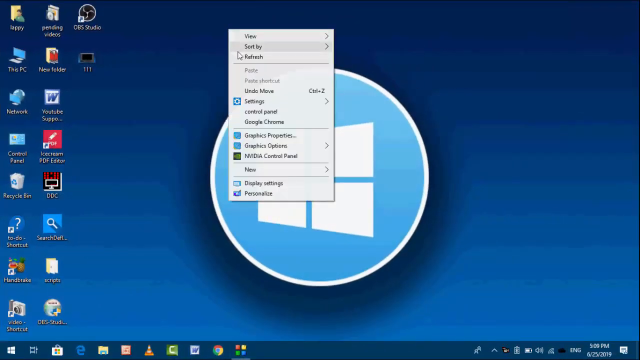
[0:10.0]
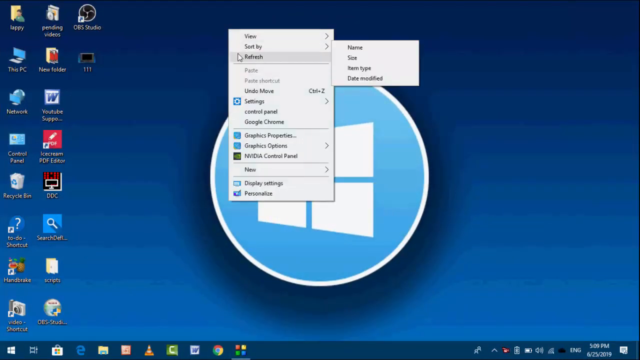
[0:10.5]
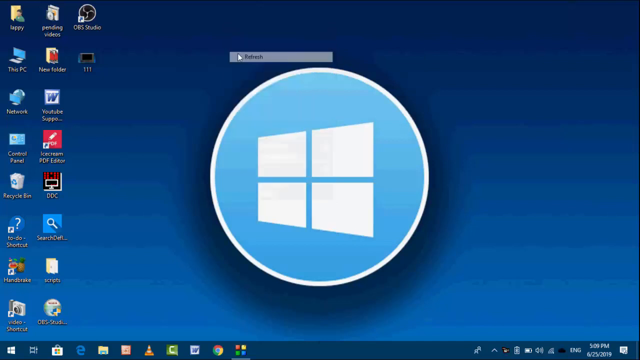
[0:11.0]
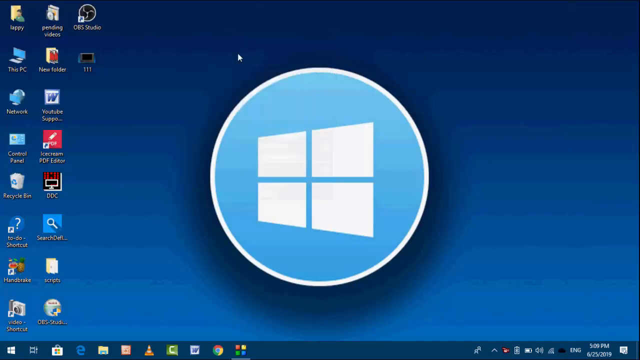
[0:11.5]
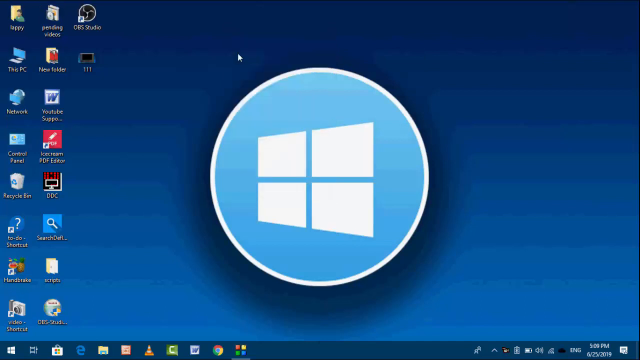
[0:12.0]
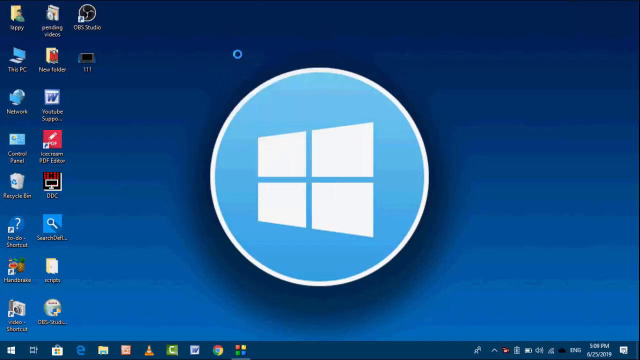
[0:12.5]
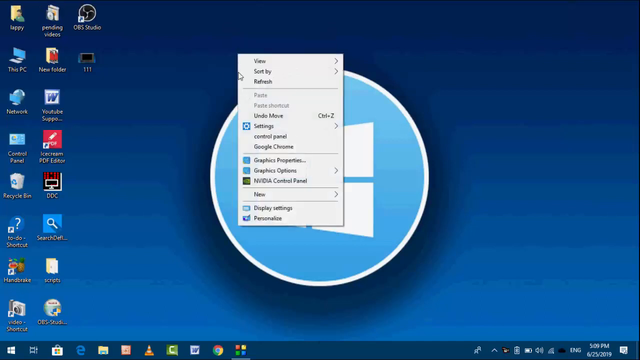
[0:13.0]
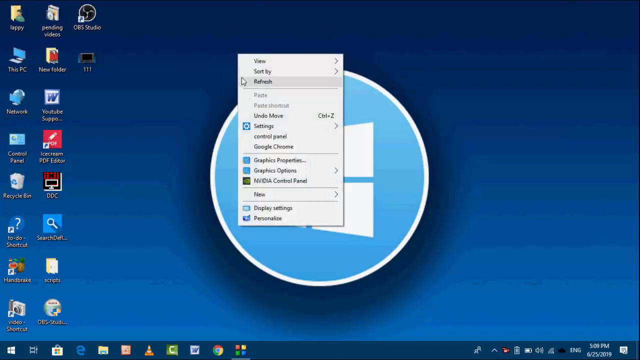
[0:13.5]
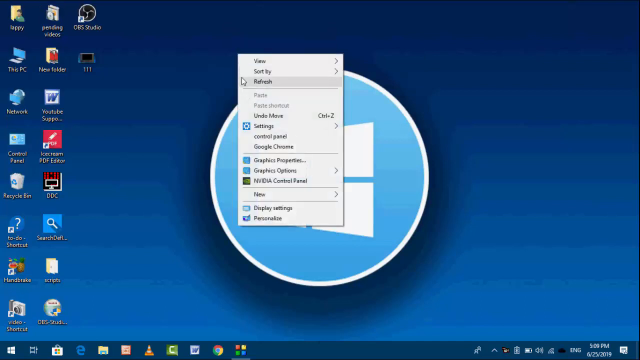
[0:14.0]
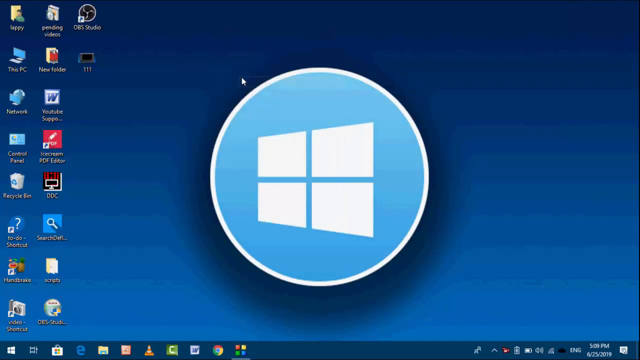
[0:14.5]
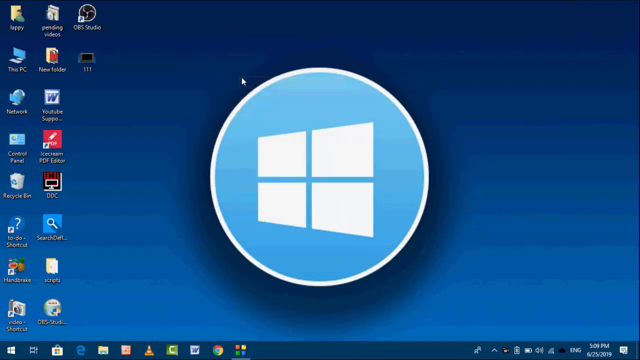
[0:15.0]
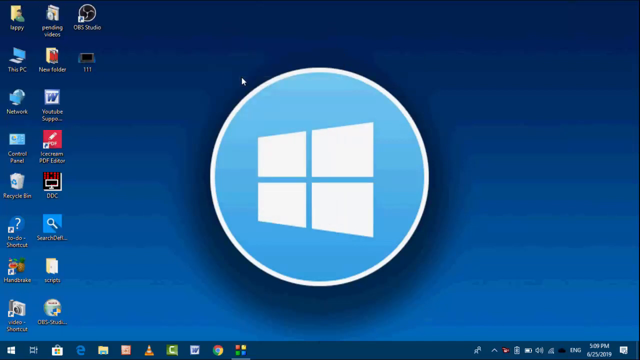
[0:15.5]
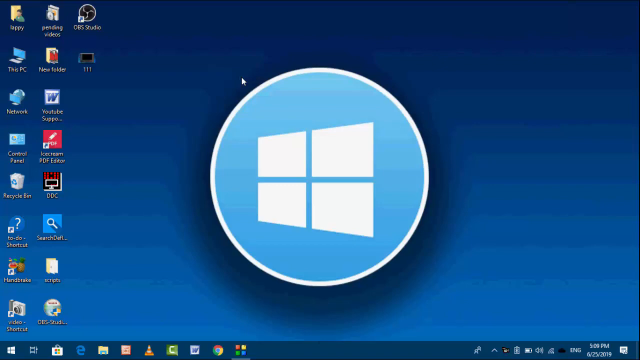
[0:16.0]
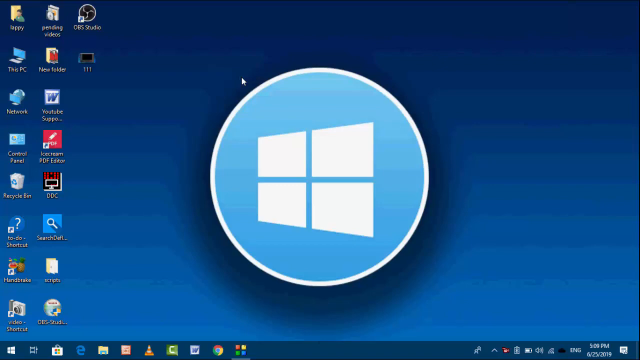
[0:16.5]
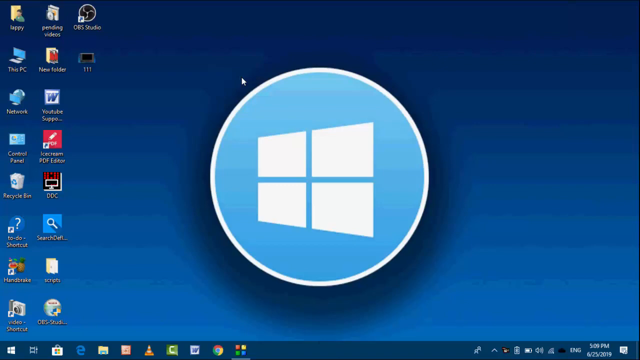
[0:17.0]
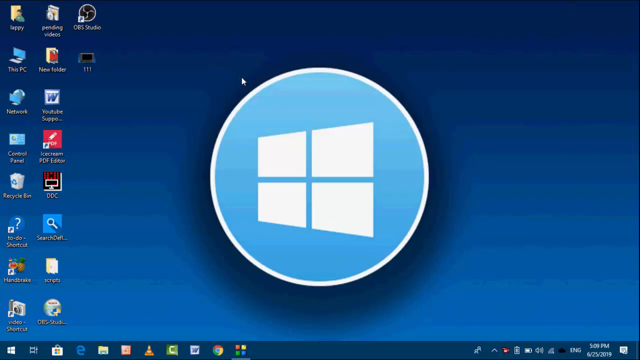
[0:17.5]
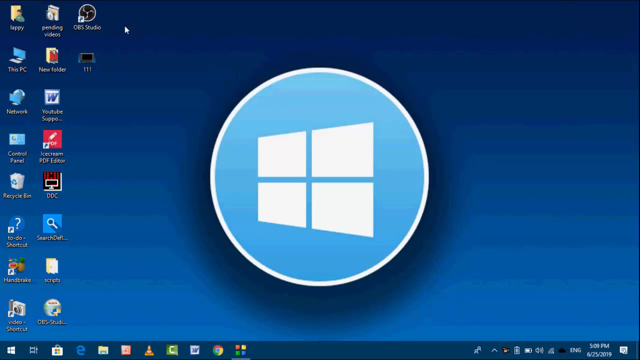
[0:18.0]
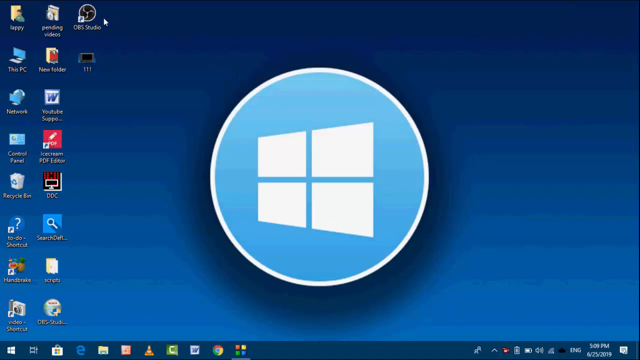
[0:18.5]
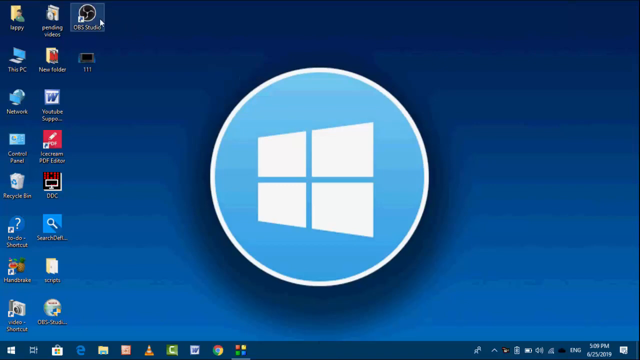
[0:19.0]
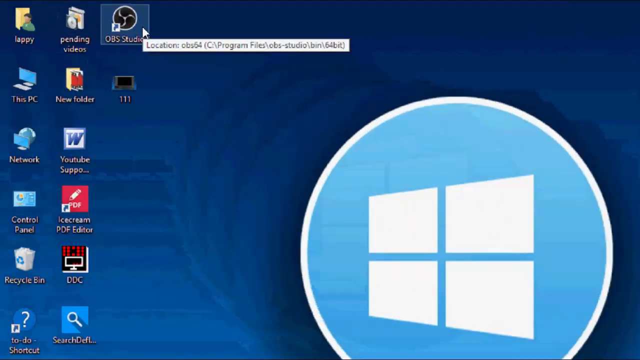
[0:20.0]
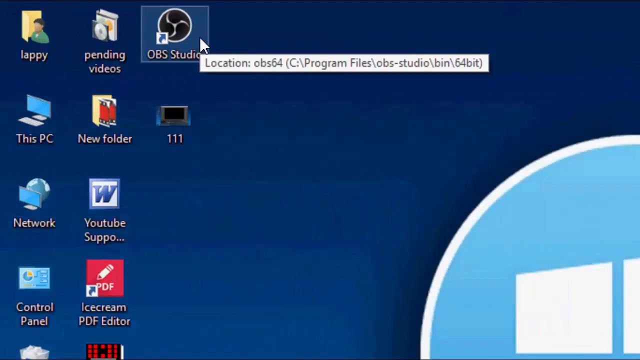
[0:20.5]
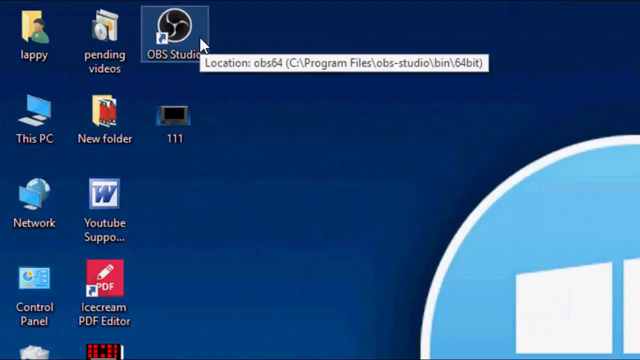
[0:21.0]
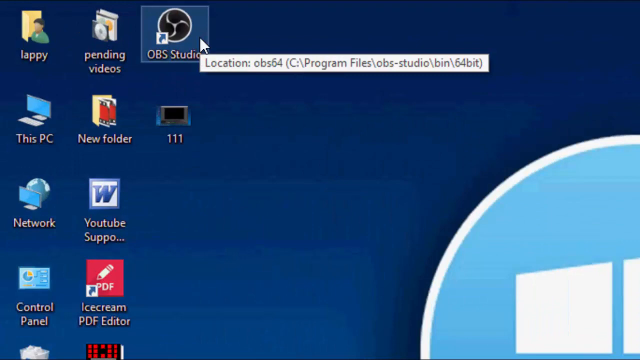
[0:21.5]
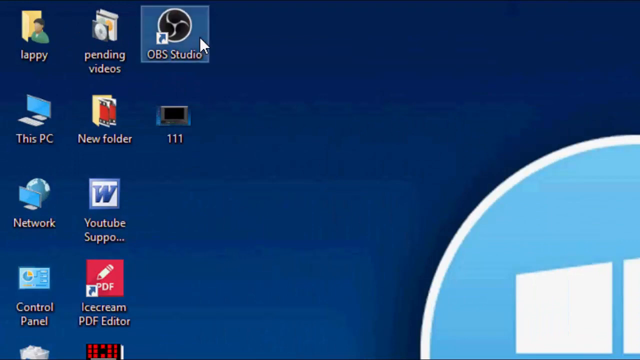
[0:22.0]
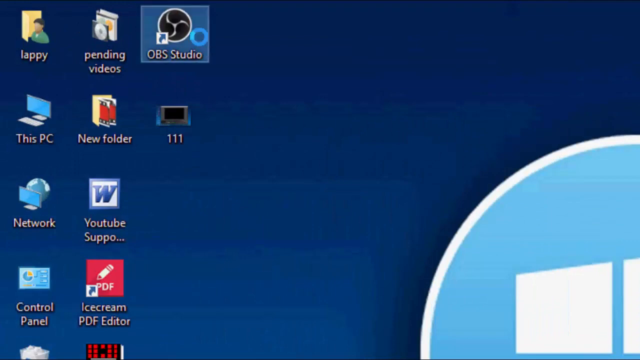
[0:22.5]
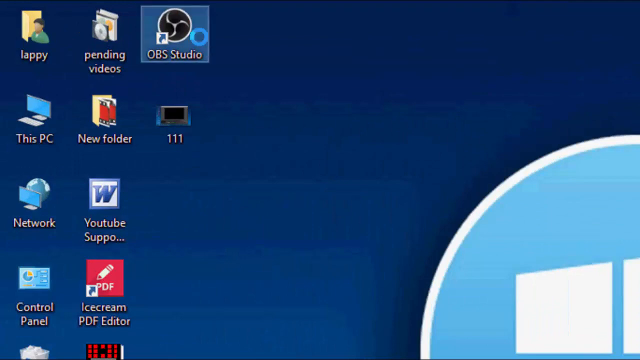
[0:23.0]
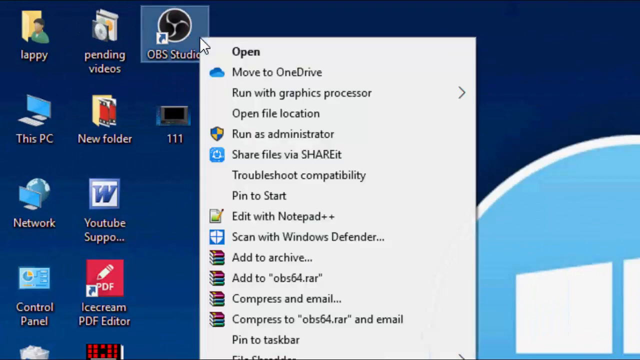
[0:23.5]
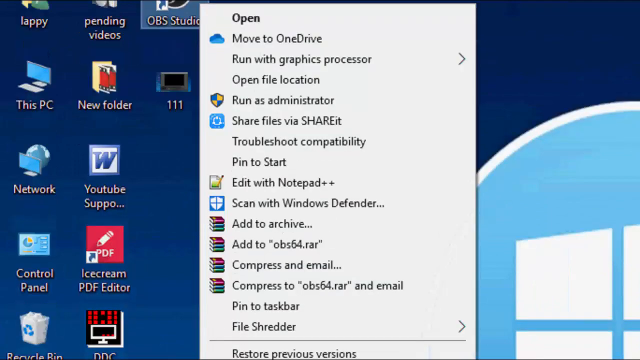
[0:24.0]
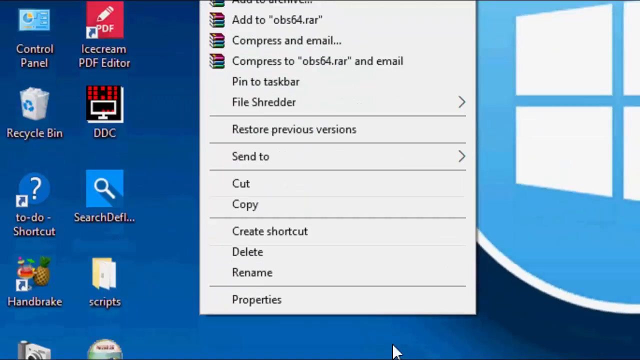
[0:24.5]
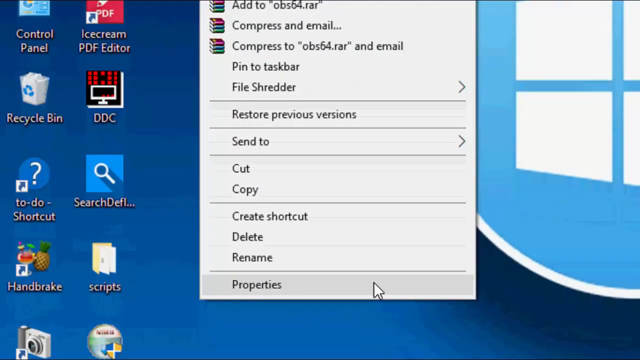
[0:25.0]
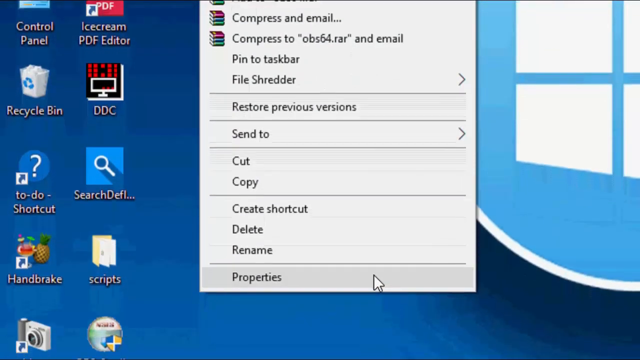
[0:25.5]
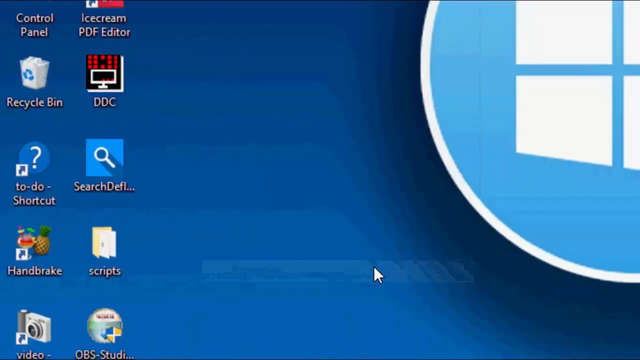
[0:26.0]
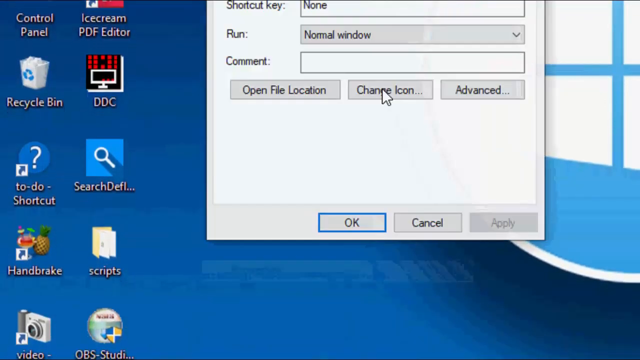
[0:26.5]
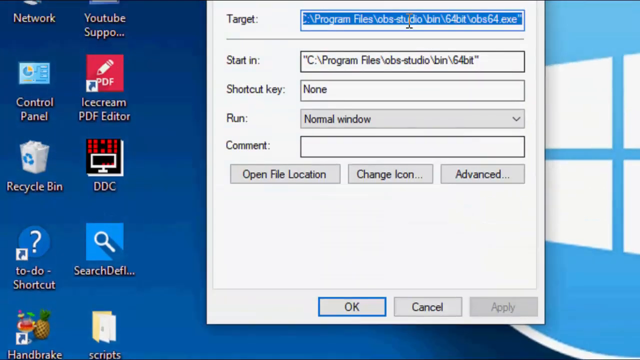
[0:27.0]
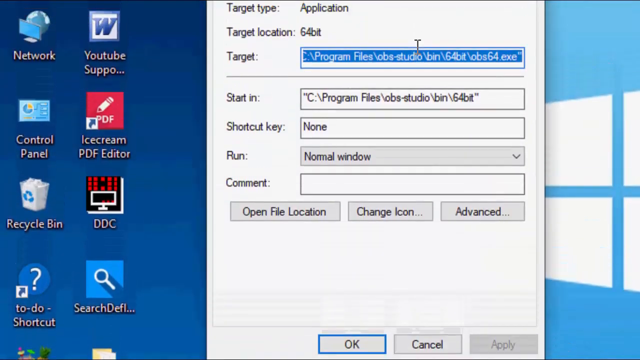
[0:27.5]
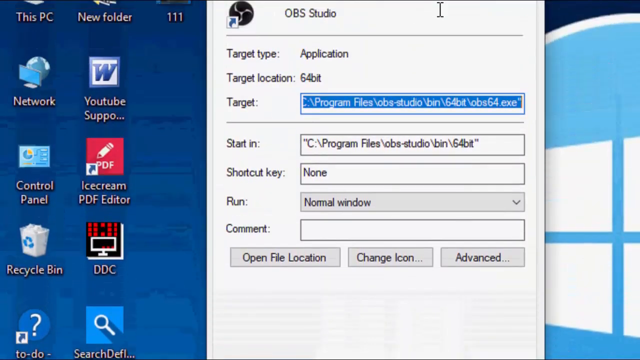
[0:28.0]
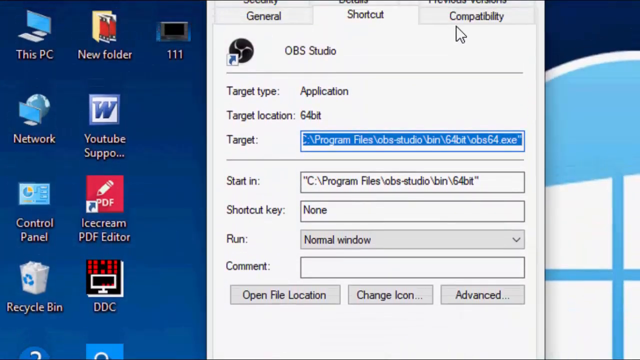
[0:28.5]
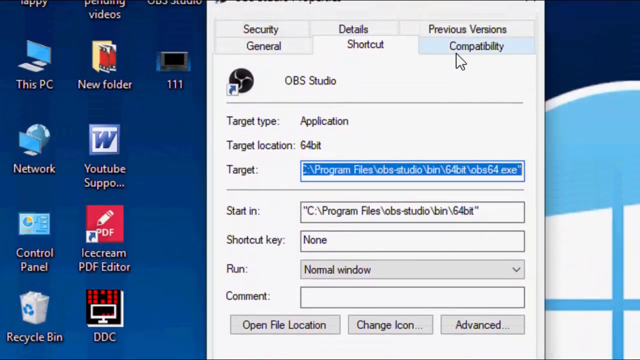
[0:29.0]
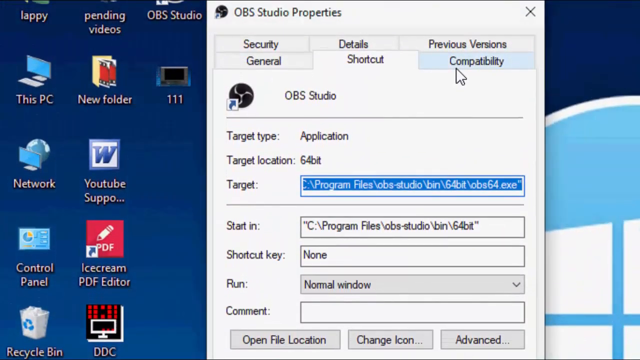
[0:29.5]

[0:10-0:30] The person continues using the computer on the desktop, where various applications and folders are shown, some labeled video shortcut, scripts folder, to do shortcut, ddc, recycle bin, control panel, youtube, network, this pc, new folder, obs studio and pending videos. They right-click the screen and press Refresh, then right-click again and press Refresh, and the background and computer refresh. The view zooms in on the OBS Studio application, which they double-click or right-click, and they select Properties from the drop-down menu. The view then zooms in on the new Properties window. Options seen in it include Target Type, Application, General, Shortcut, Compatibility, Target, Start In, Shortcut Key, Run, Comment, Open File Locations, Change Icon and Advance. The Target location is highlighted as the person selects Compatibility.